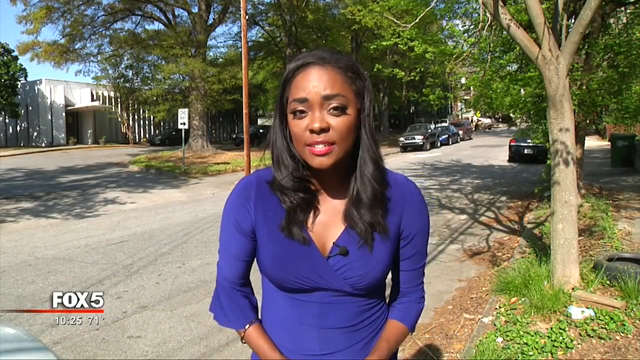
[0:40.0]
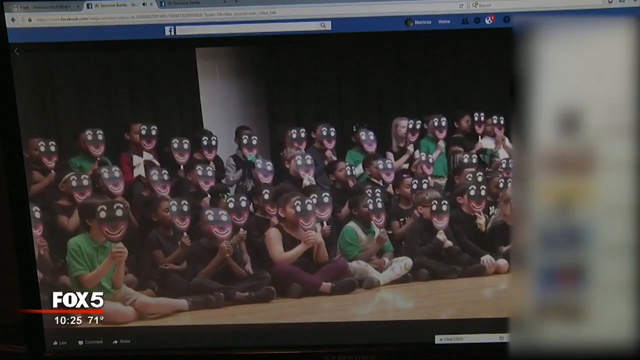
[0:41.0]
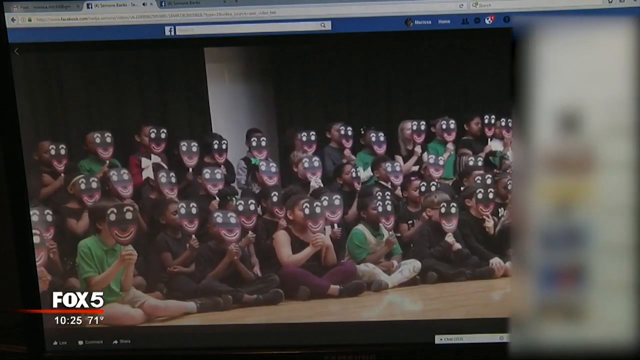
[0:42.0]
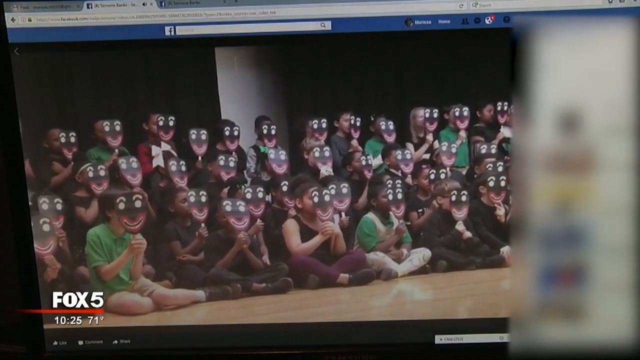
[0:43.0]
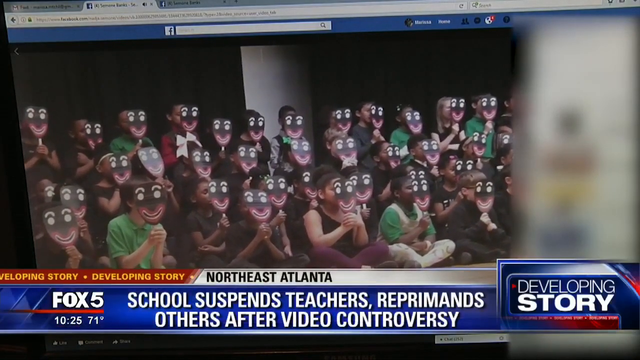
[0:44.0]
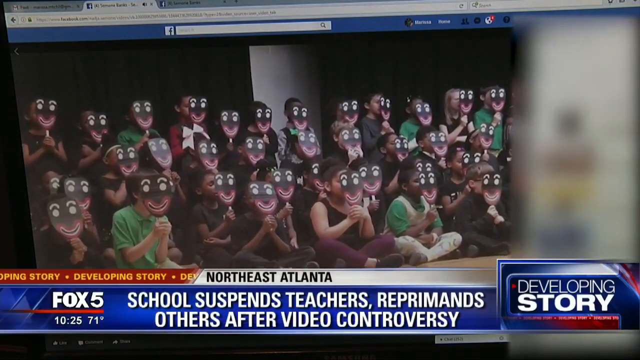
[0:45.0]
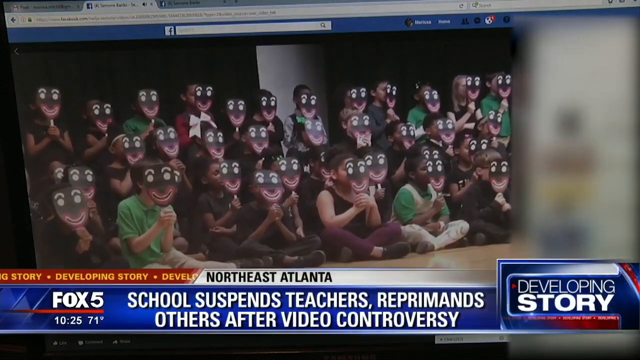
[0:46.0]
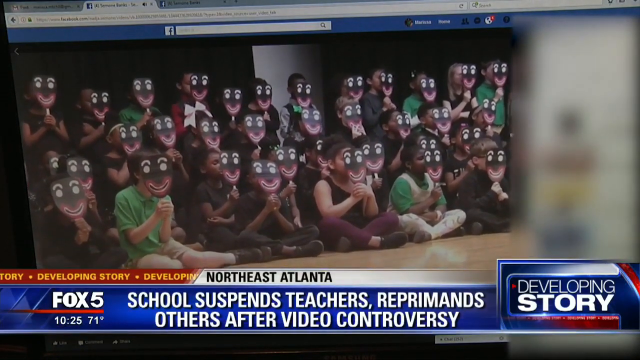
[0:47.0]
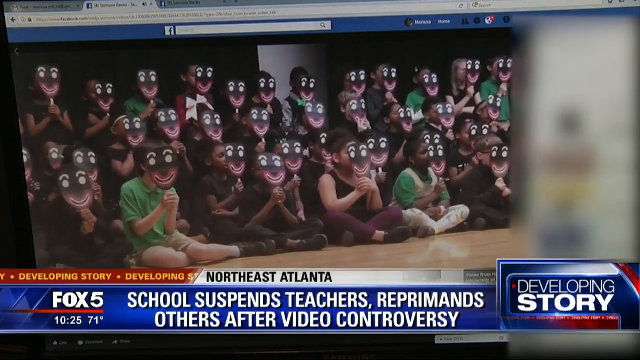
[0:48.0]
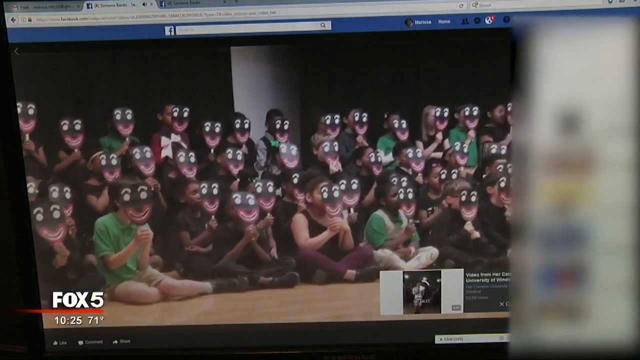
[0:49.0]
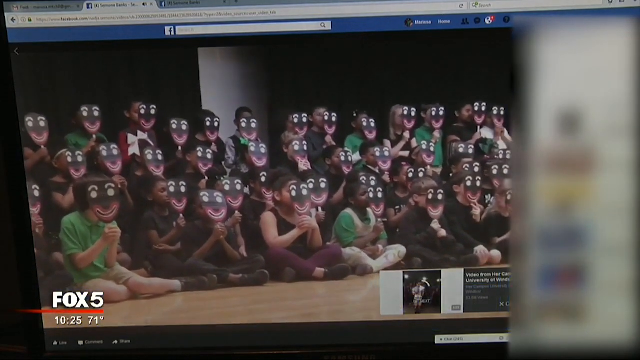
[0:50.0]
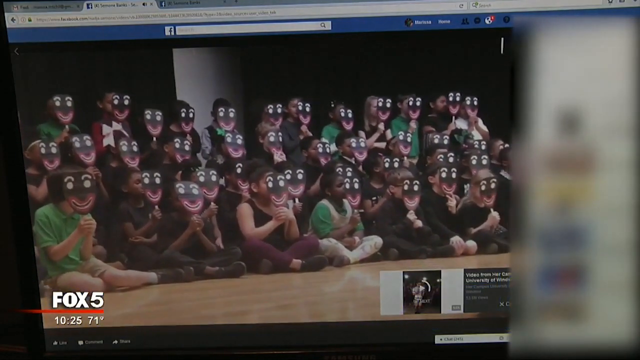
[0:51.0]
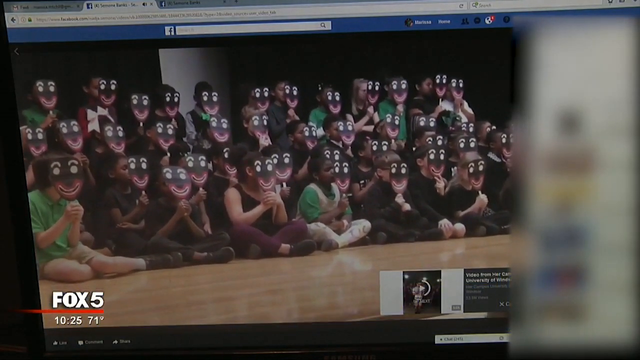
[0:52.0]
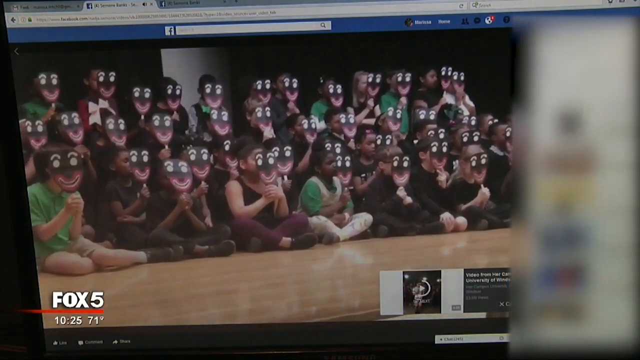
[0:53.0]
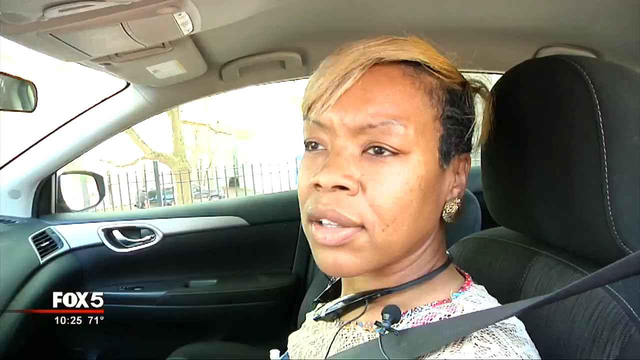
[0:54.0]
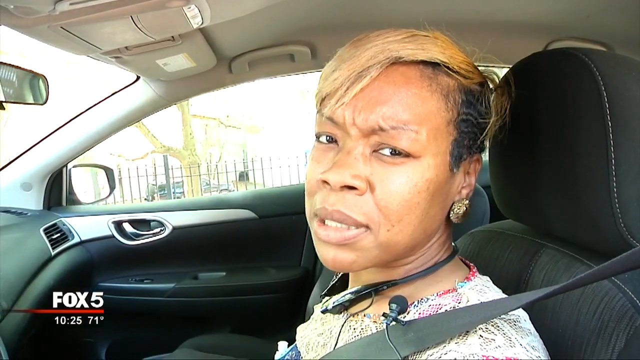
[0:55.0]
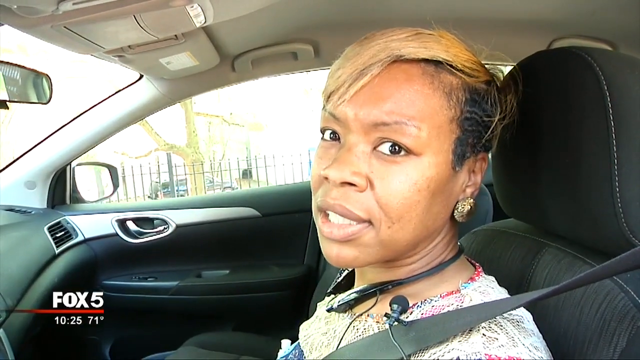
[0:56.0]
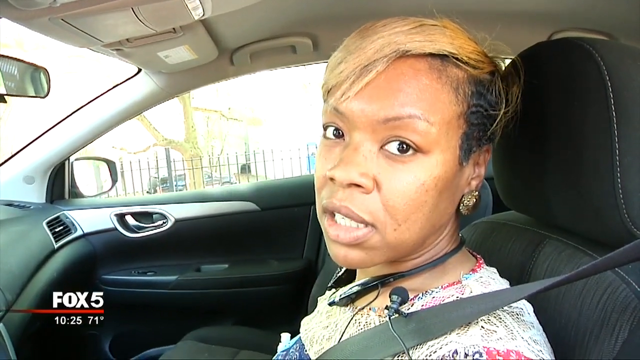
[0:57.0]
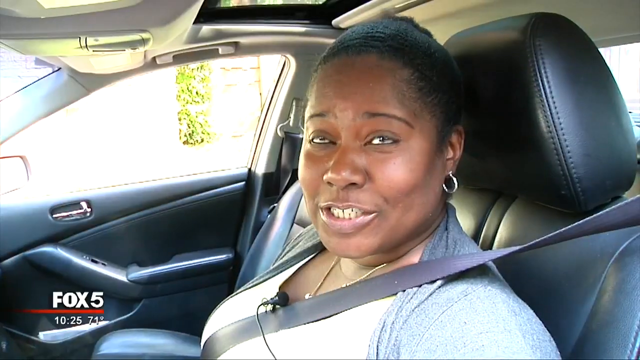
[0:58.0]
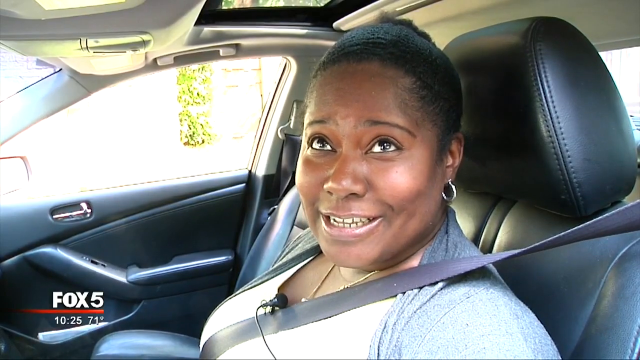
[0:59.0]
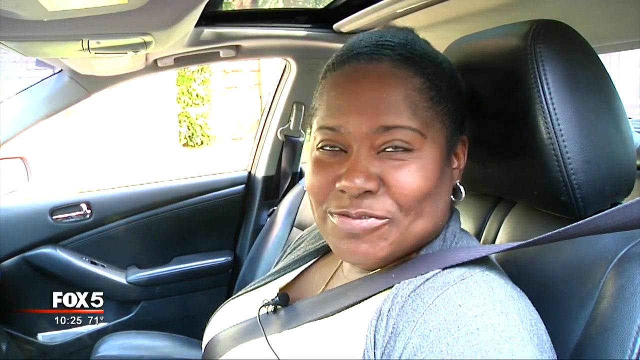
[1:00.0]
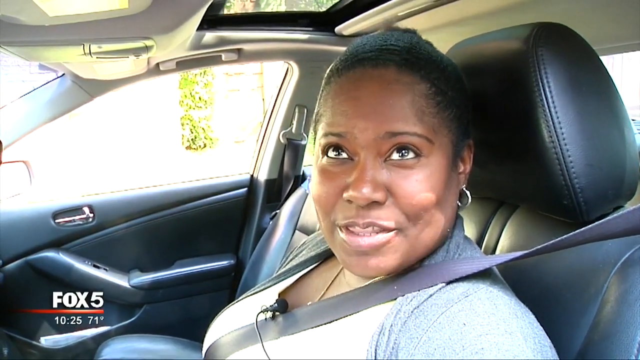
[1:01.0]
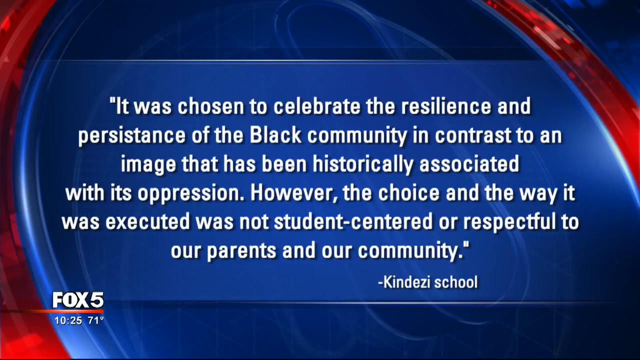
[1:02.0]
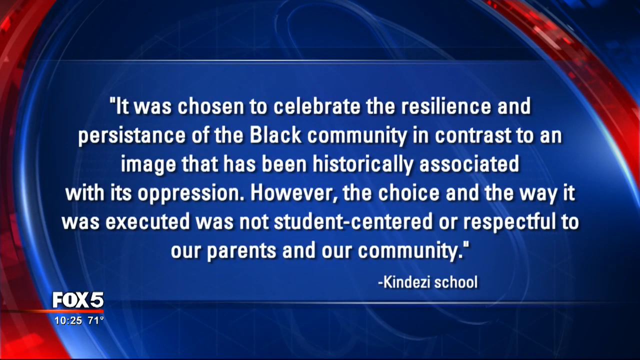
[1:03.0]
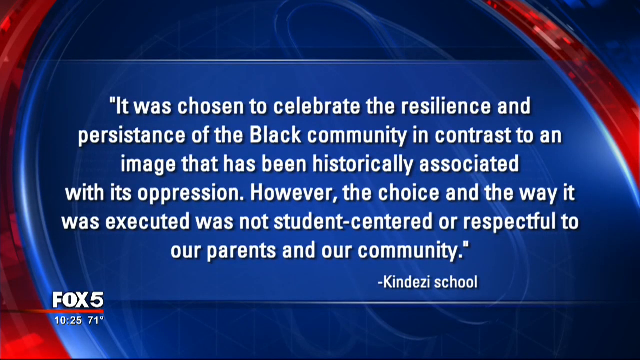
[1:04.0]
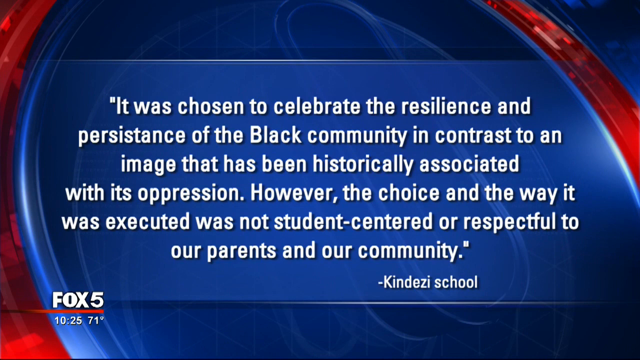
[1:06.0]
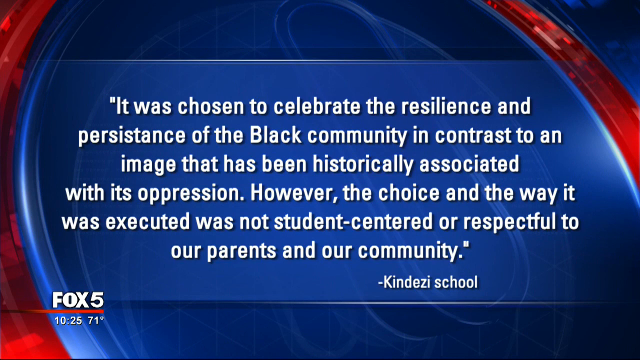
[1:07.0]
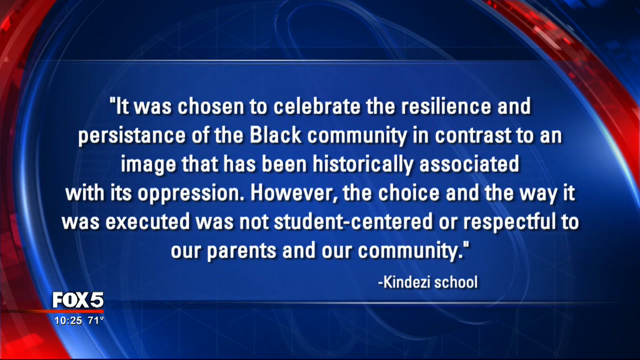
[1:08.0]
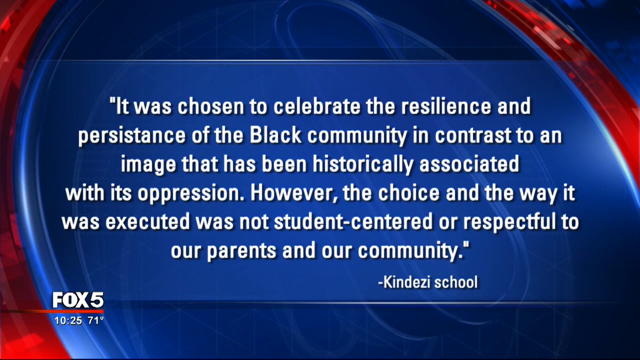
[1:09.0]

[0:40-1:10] Fox 5 News cuts to a reporter who went to visit a school. She wears a blue dress and a long weave and appears to be Black. She reports from outside, in an area full of green trees, with cars parked along the road. It looks like a sunny afternoon. The road is clean, but the sidewalk is covered with leaves fallen from the trees. The report concerns a school incident, and it shows many children hiding behind black and white masks, so many that it is impossible to tell whether the crowd is boys or girls, with their identities hidden. A headline reads "school suspends teachers, reprimands others after a video controversy".